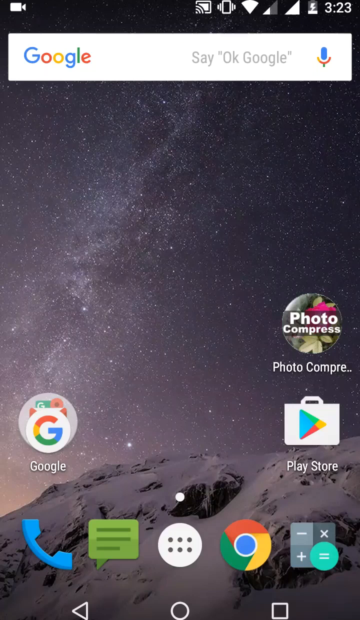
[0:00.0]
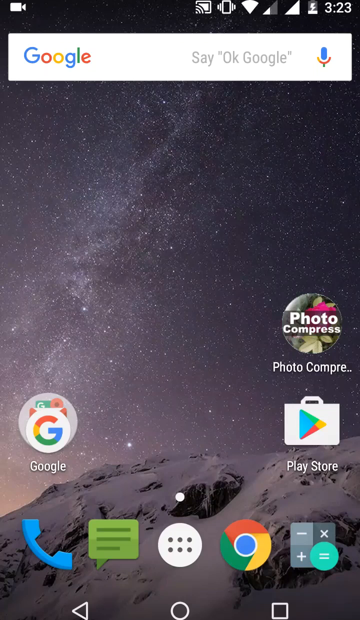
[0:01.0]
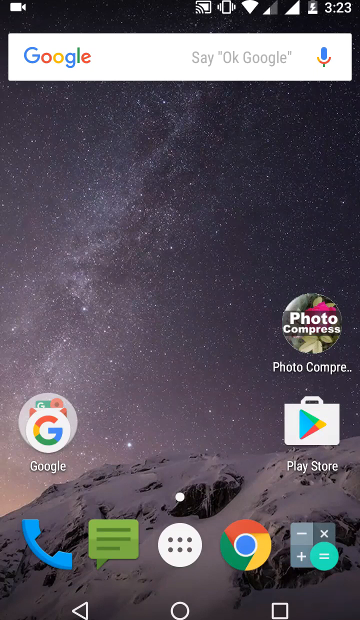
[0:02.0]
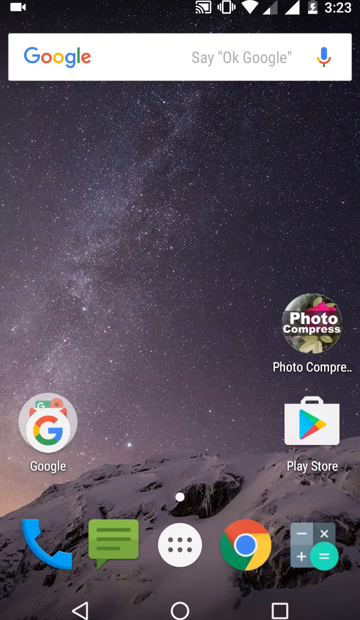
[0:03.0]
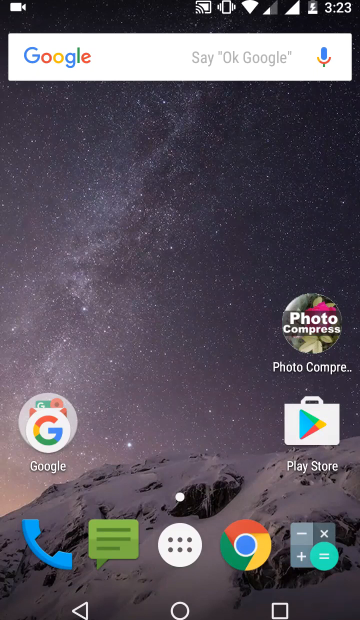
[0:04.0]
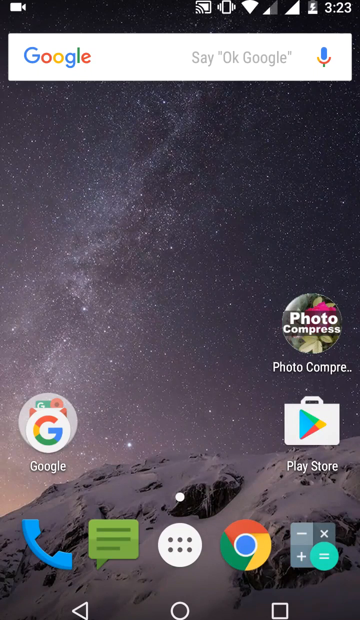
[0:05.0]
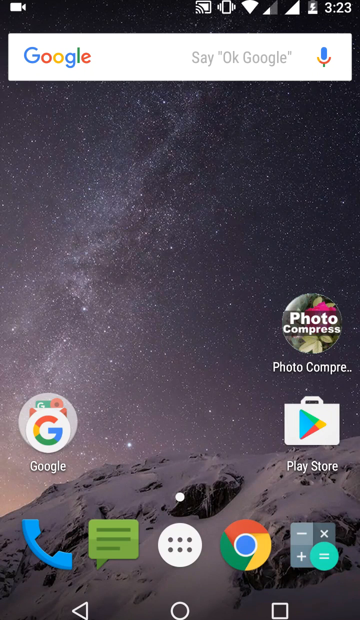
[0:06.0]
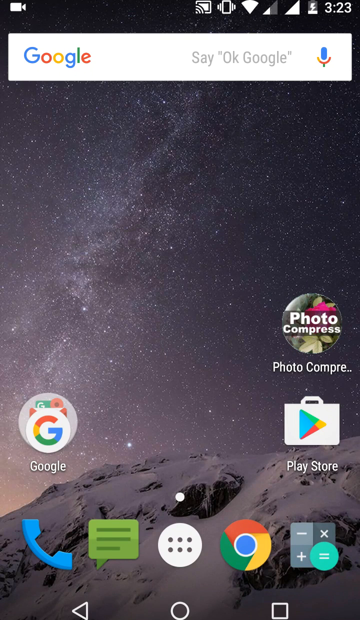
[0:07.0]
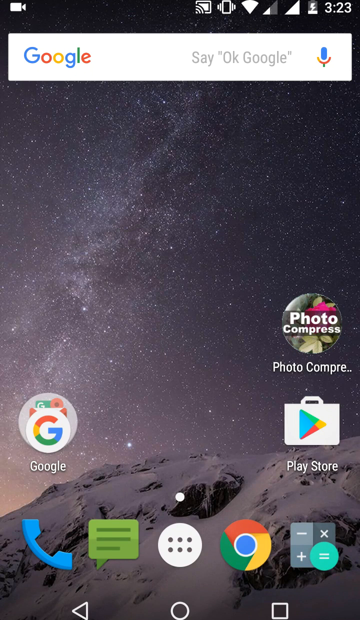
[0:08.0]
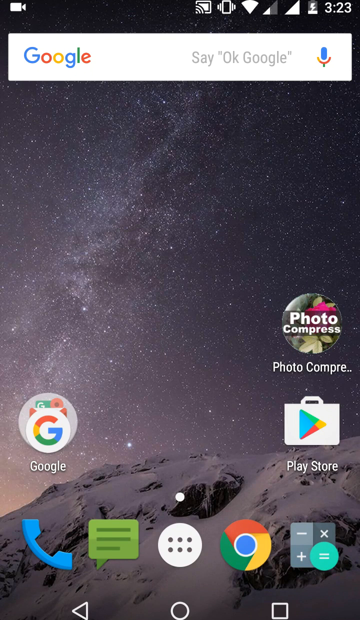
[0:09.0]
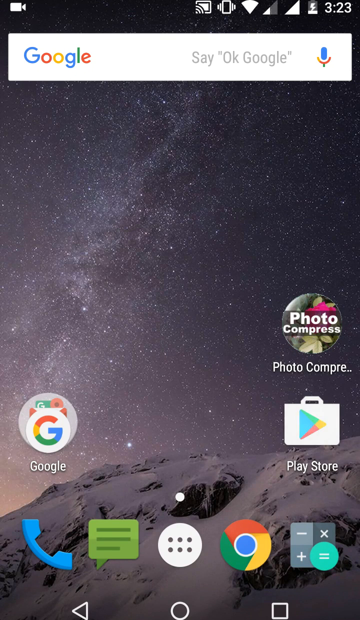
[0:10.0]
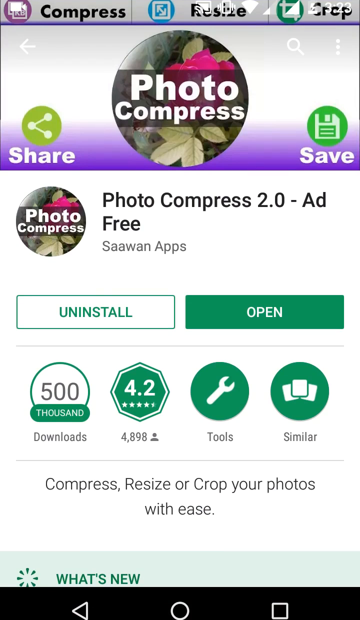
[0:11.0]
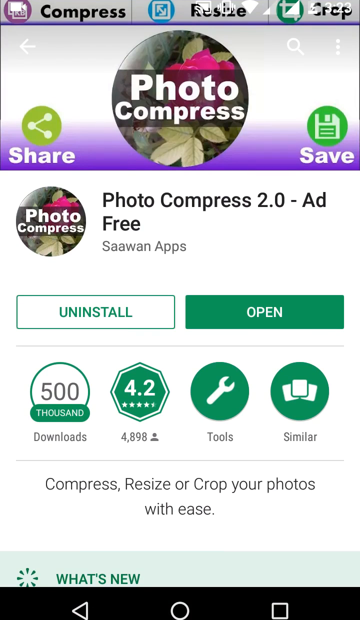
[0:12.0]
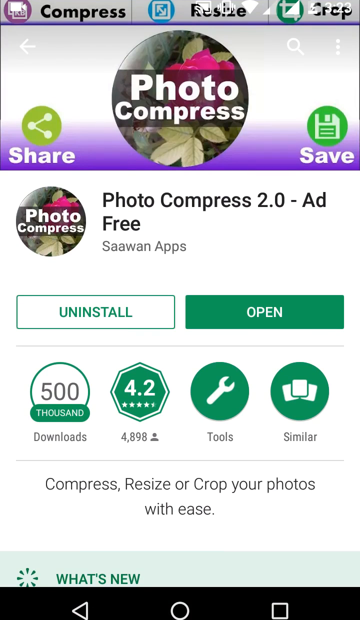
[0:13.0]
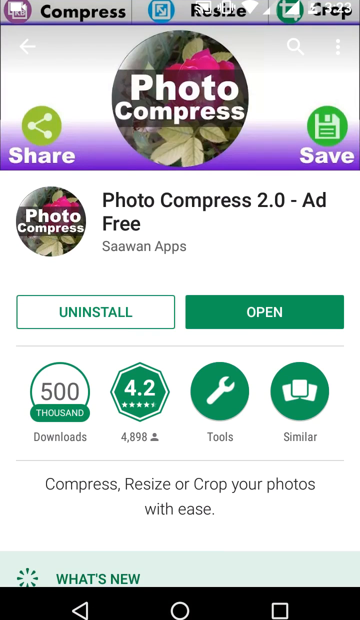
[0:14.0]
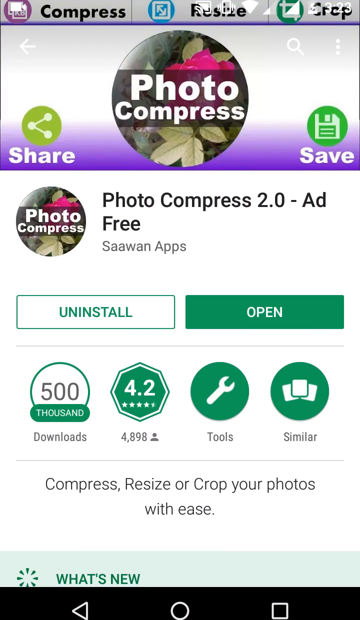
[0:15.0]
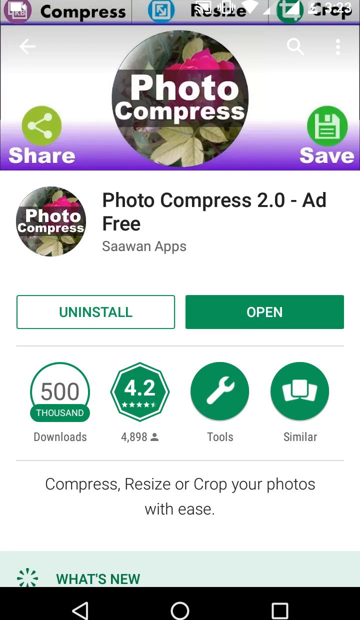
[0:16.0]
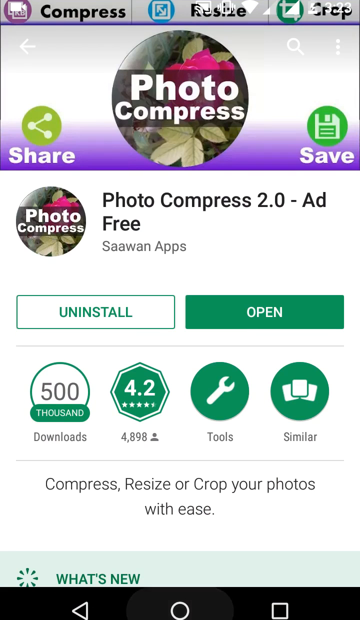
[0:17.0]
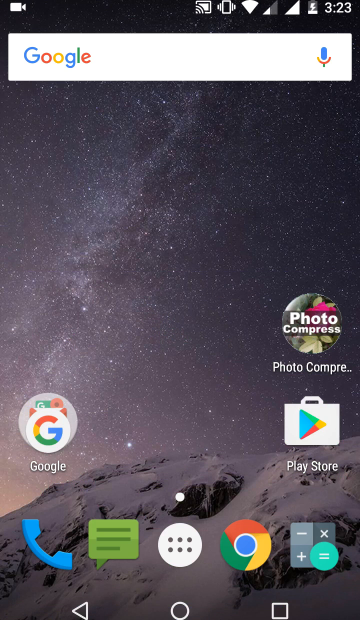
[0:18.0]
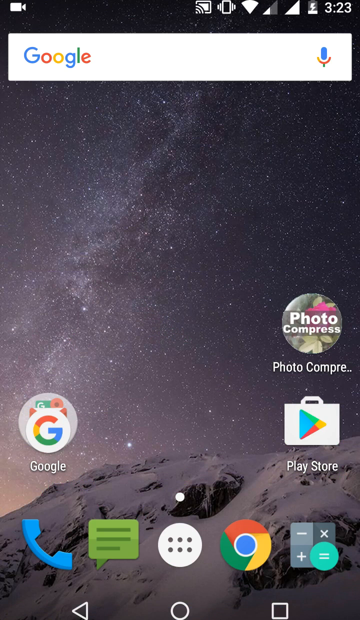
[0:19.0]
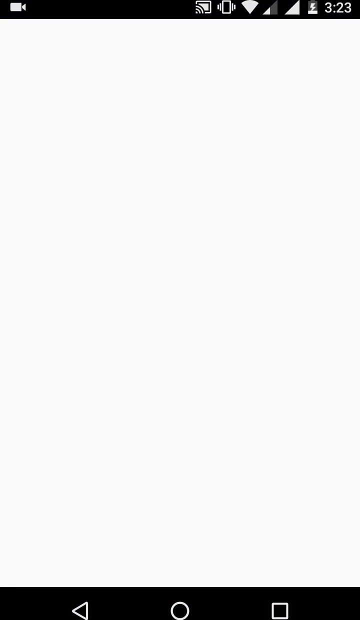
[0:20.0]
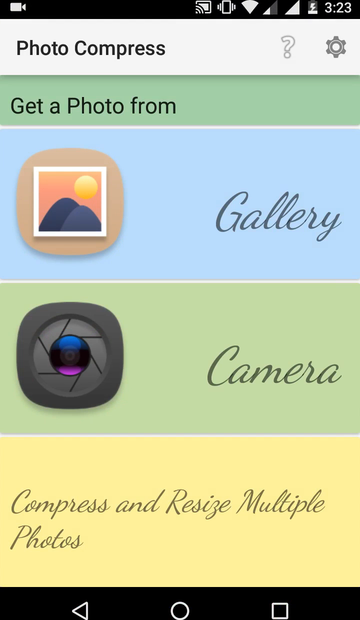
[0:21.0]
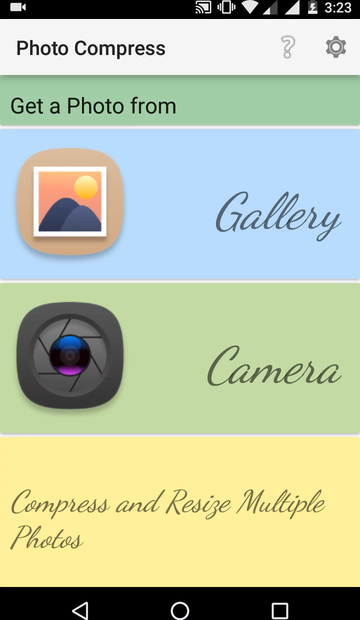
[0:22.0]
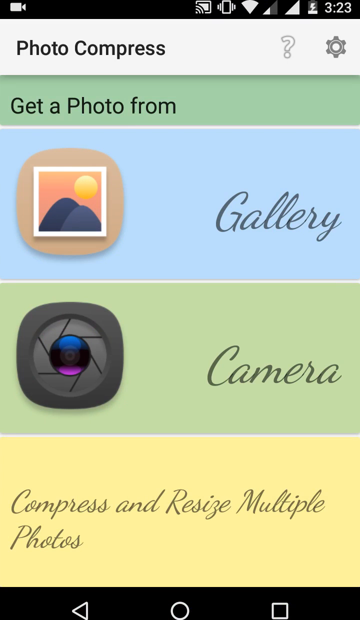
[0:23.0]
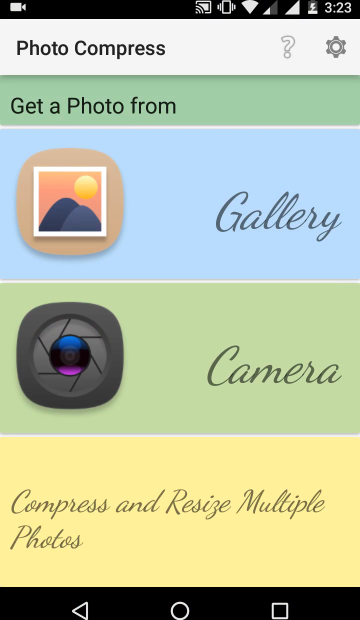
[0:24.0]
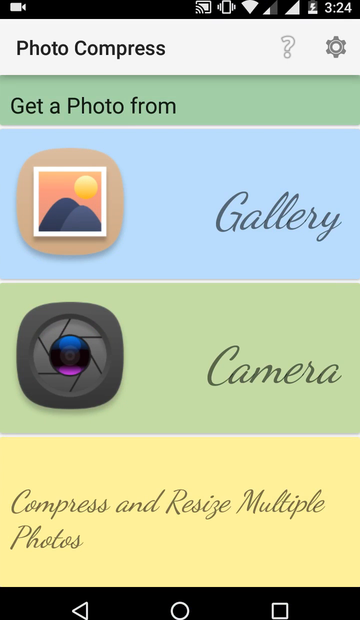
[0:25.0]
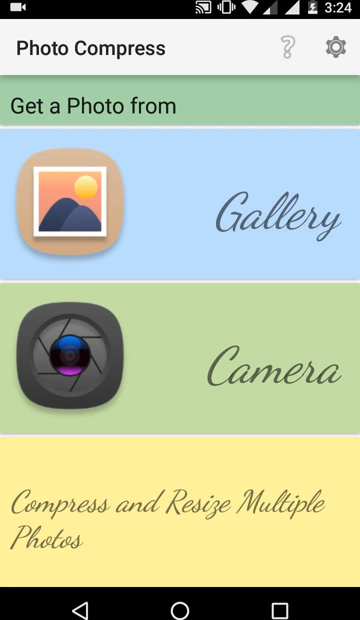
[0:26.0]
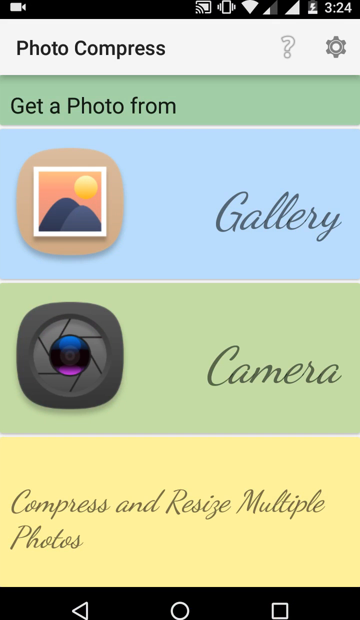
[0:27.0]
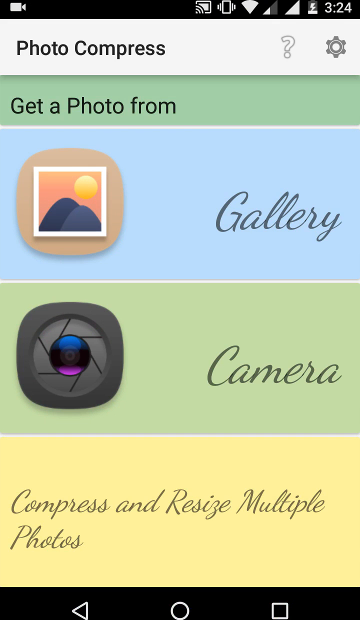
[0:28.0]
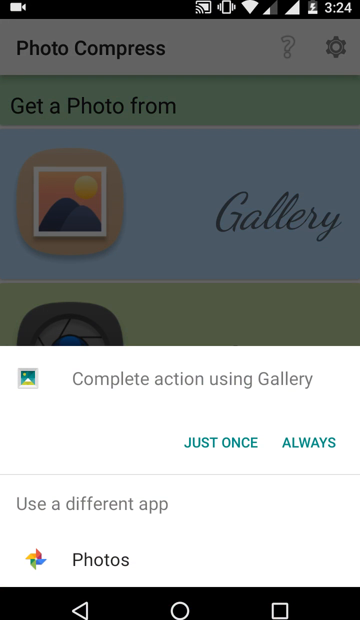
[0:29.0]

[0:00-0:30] A phone screen shows Google and its functions, including the Play Store. An app called Photo Compress, which is free, appears there, and the screen shows how to get it and download it. Its features are listed, including the gallery and the camera, along with how many people have downloaded it.